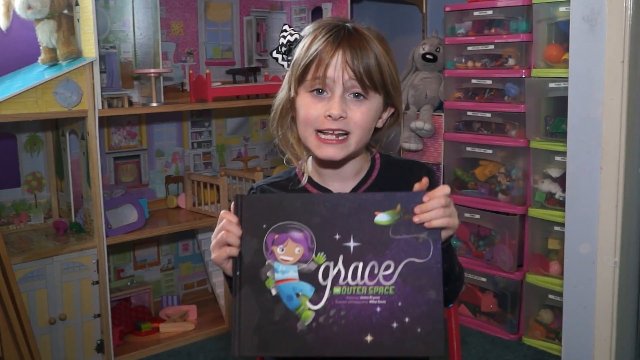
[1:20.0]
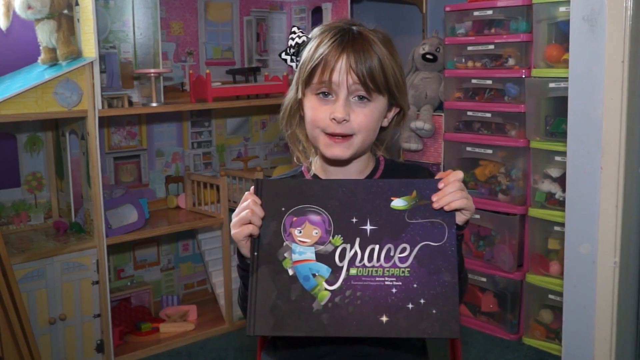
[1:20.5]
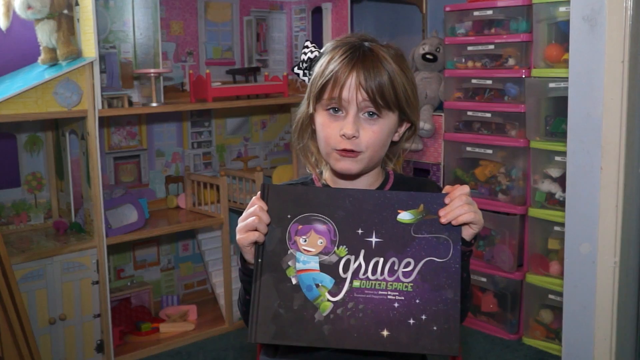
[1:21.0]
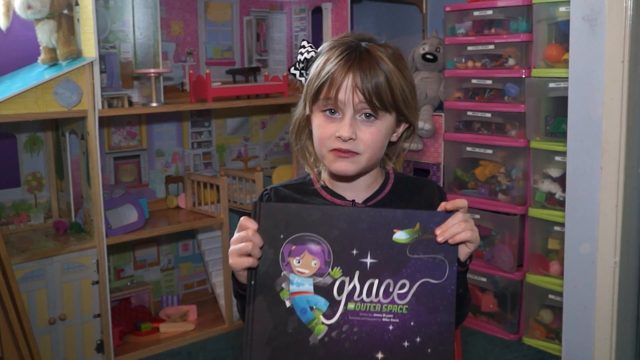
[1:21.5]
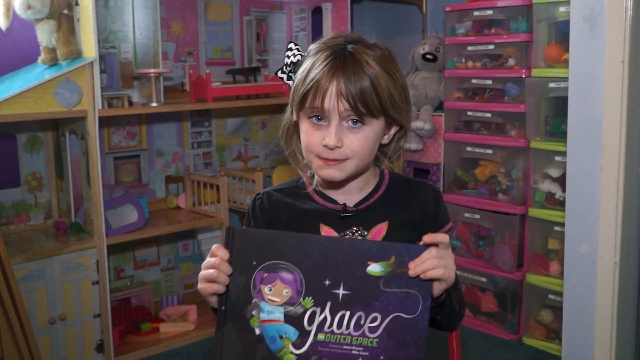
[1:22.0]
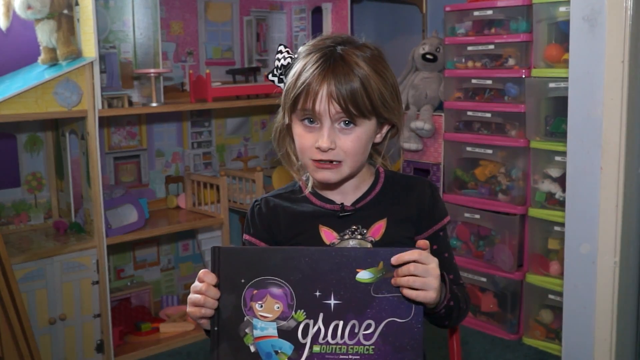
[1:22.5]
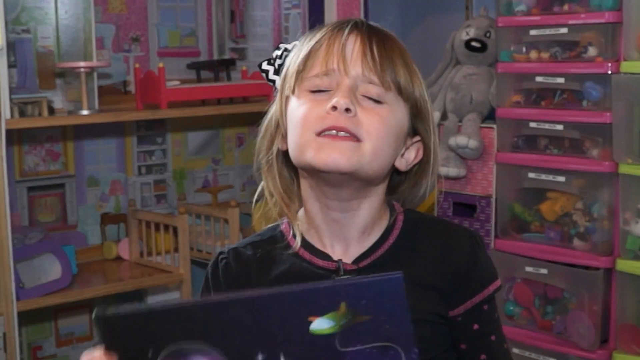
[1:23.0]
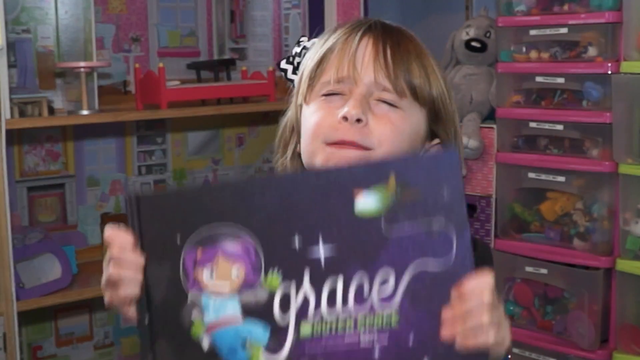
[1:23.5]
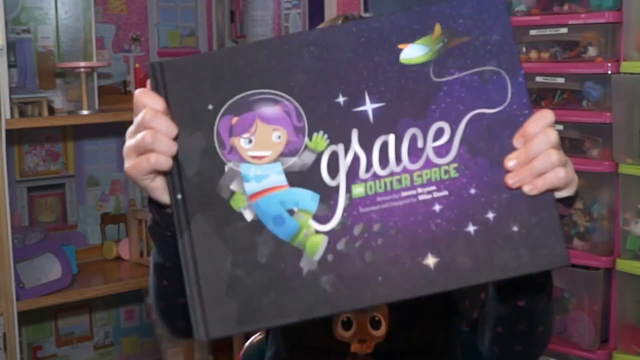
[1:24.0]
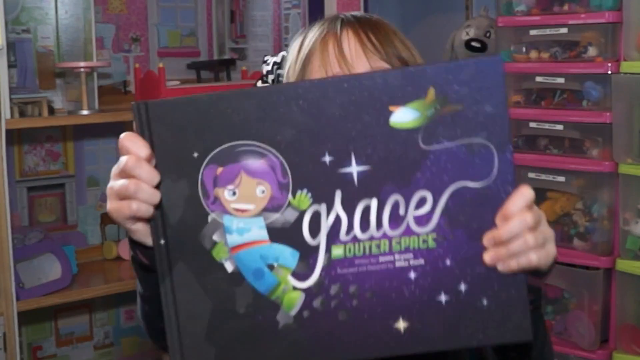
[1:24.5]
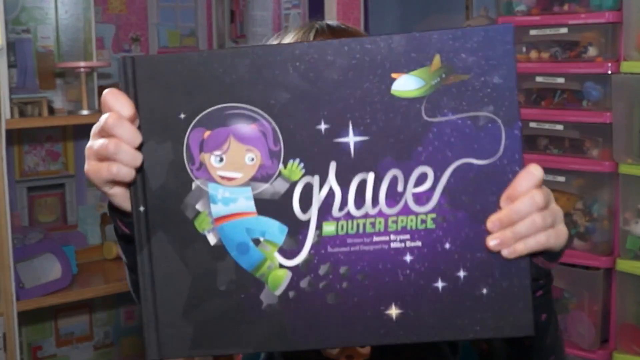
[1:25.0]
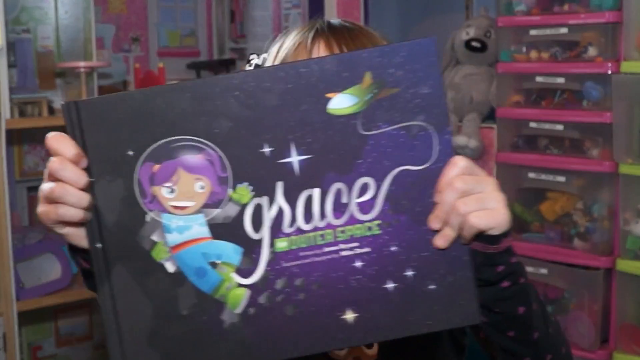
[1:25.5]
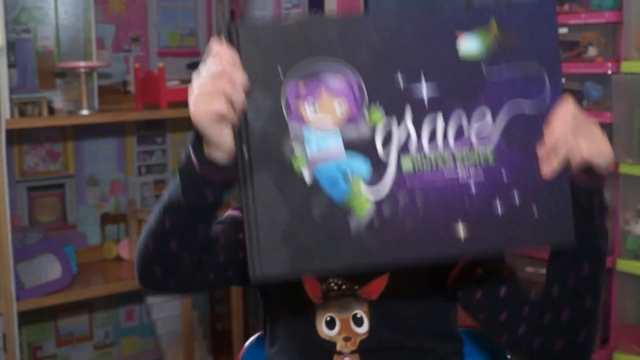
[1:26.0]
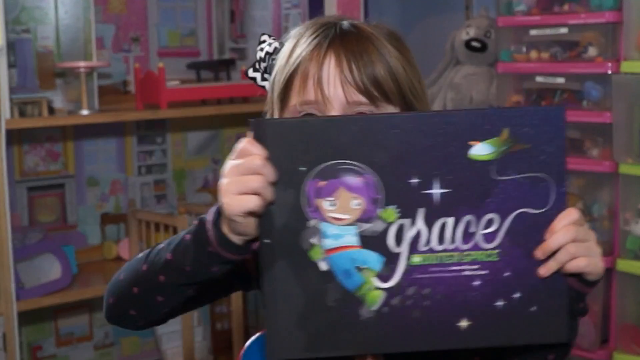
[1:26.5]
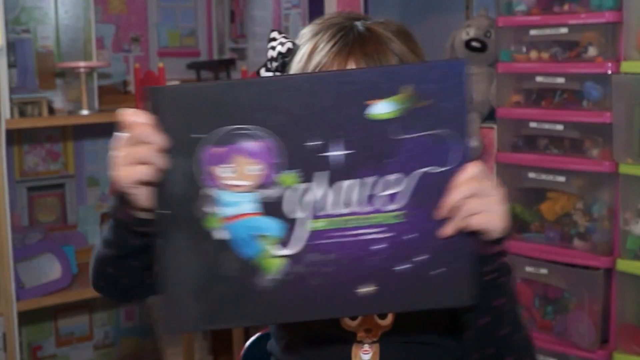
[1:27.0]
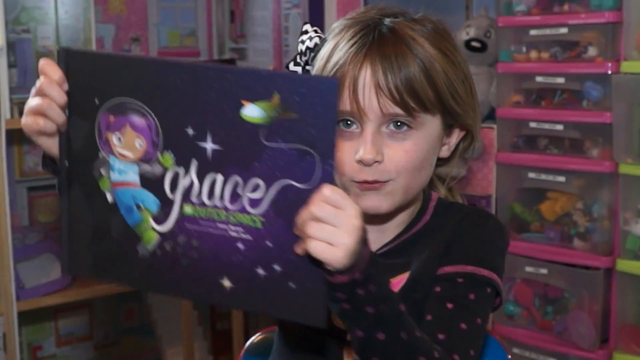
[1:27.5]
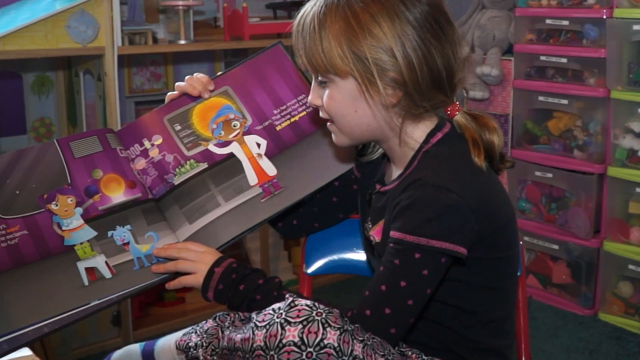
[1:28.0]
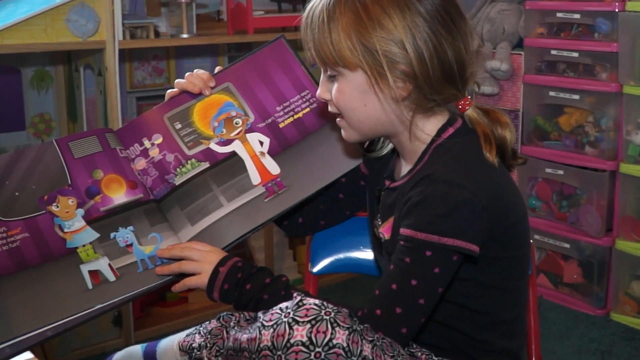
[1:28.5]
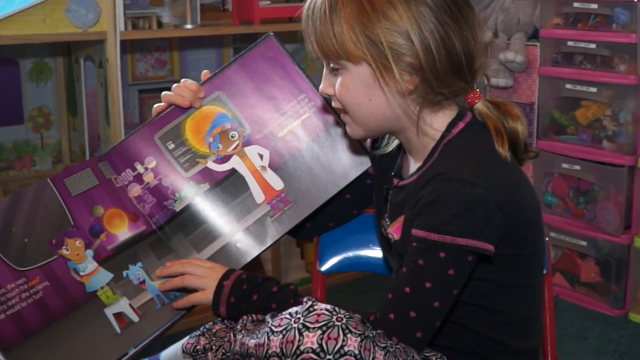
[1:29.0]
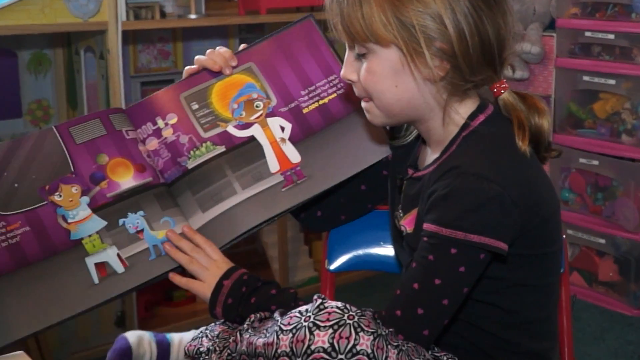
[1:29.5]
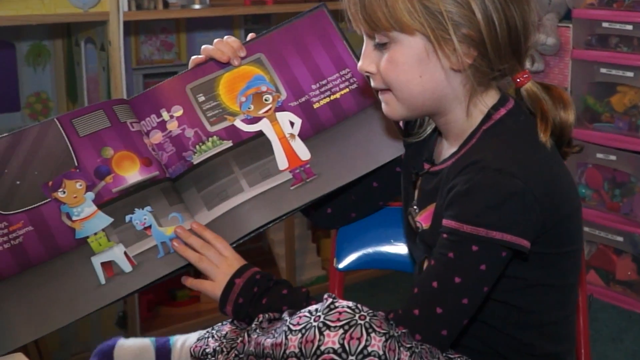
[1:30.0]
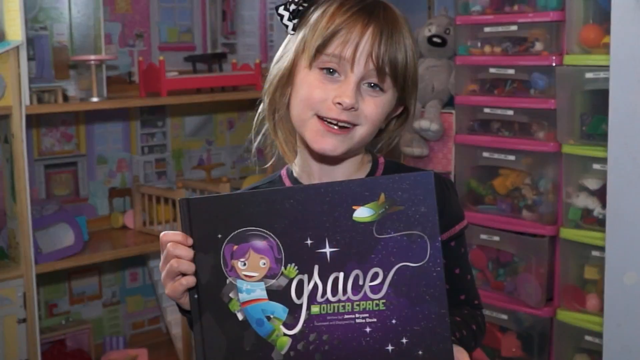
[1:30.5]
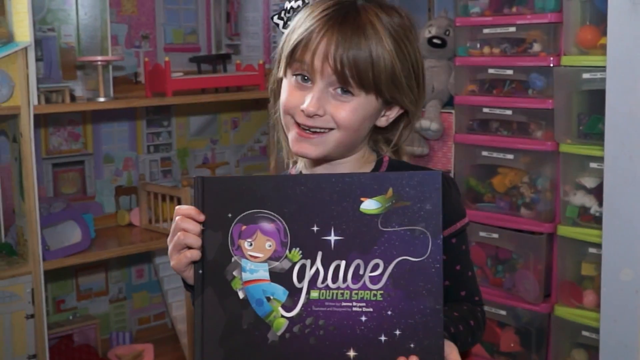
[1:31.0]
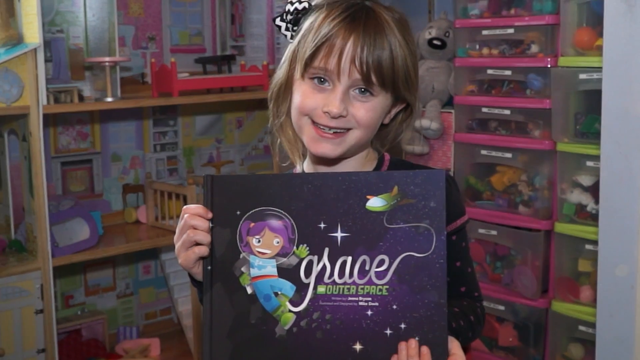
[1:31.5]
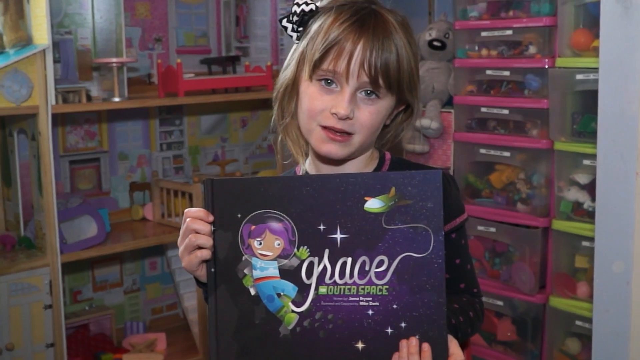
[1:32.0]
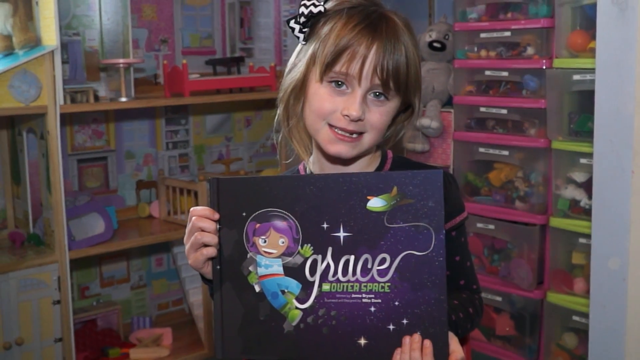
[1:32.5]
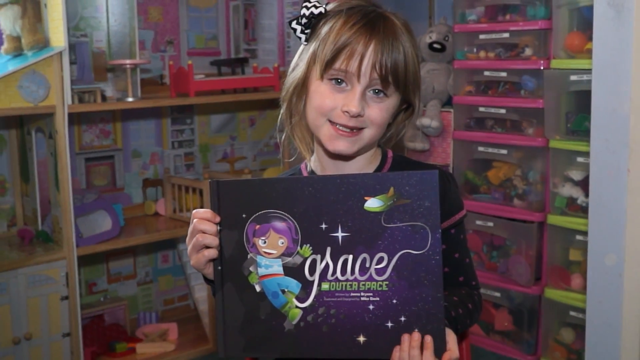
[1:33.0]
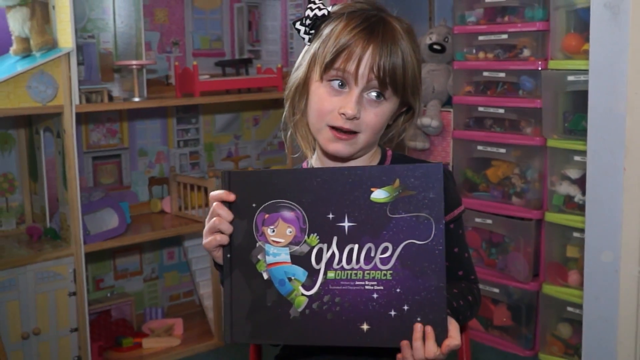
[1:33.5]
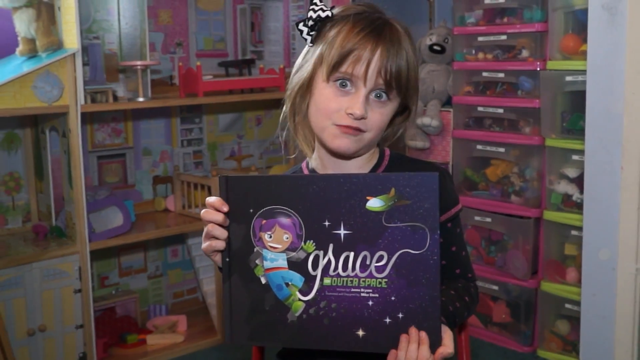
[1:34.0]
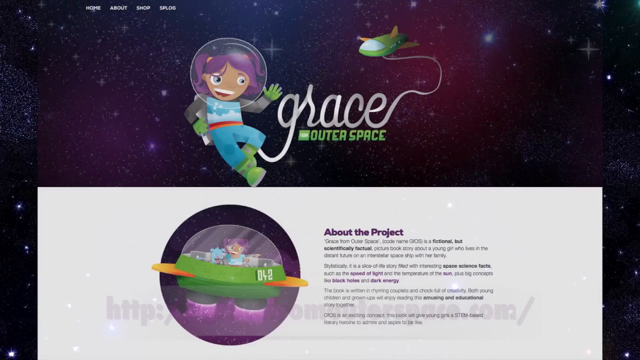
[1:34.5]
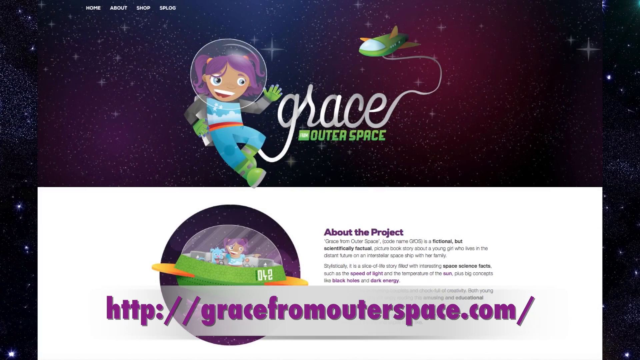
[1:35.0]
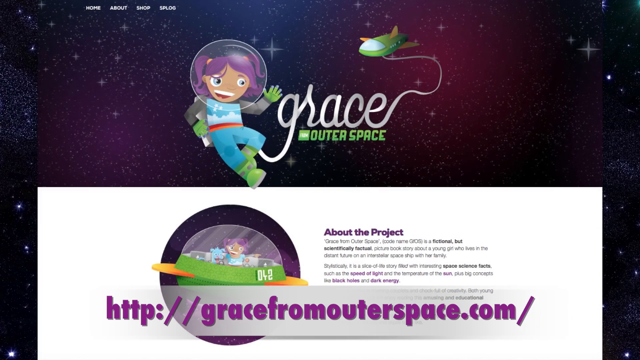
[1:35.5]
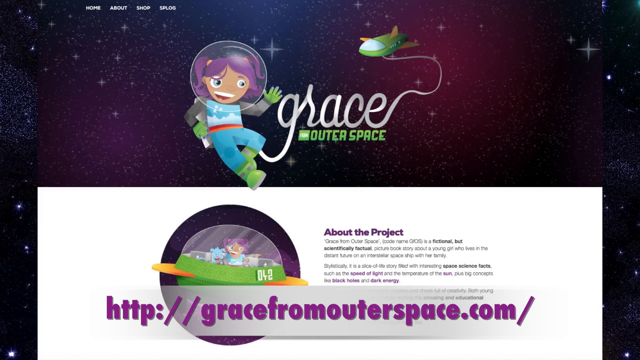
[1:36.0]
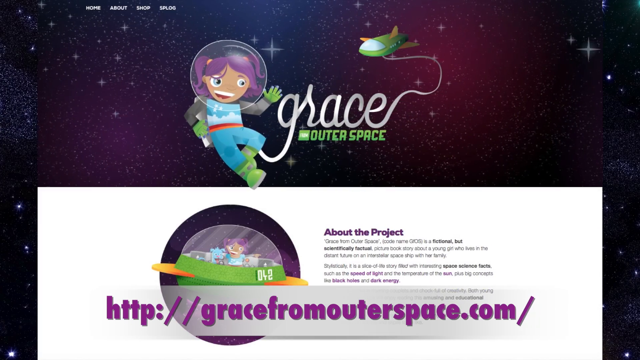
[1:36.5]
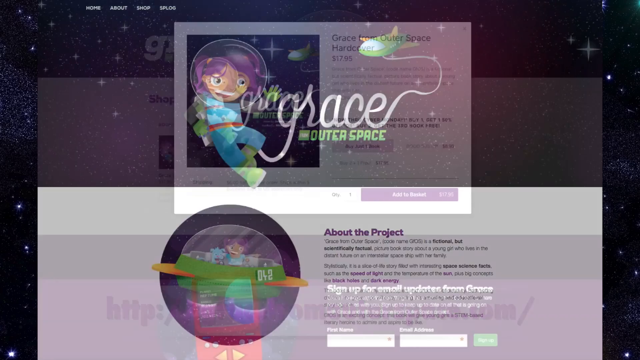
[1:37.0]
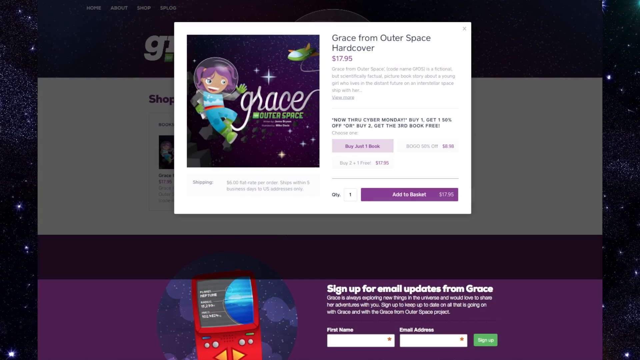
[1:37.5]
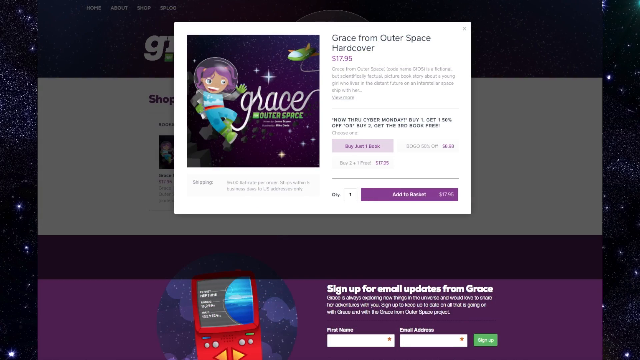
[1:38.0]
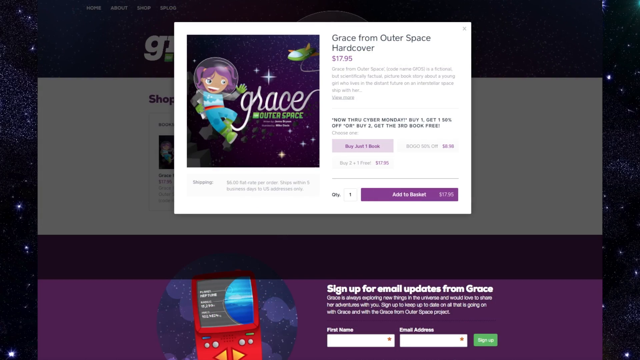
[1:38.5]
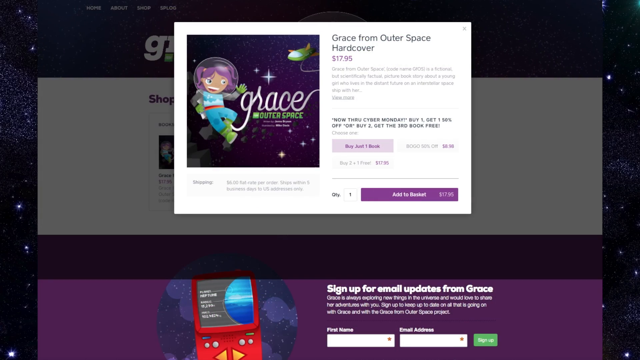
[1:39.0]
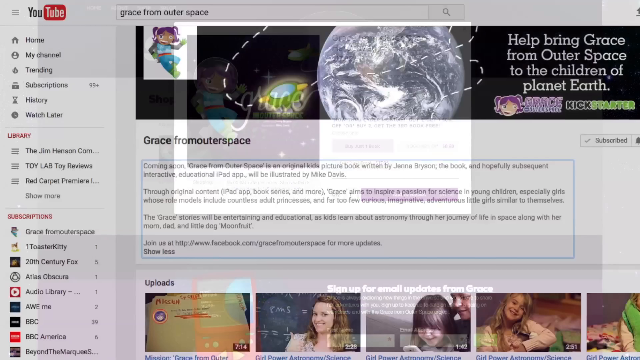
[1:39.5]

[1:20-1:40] The young girl shows the book Grace, with the young astronaut on the cover wearing the space helmet over her purple hair. She talks, then lifts the book high up to the camera with an expression like "please" as she closes her eyes, so it looks as though she is begging viewers to read it. She is very enthusiastic and waves it around in a circle. She then looks inside the book again at an image of the young astronaut in her mum's laboratory looking at the experiments with her dog, Moon. The girl smiles and talks to the camera again, holding the book, looks to the side and then back to the camera. Another page shows the astronaut with "Grace from Outer Space", details about the project and the website "http://gracefromouterspace.com", with Grace hovering in space attached to her spaceship. A box appears over this page saying "Grace from Outer Space hardcover $17.95", with details of where to buy it through a Cyber Monday sale: "buy one get one 50% off", or an offer of the third book free. A YouTube page for Grace from Outer Space follows, with details about the book and the author.